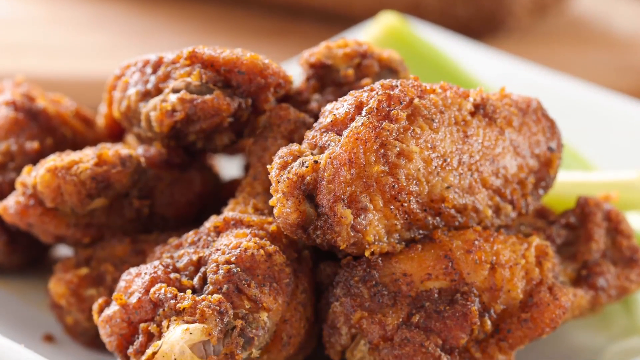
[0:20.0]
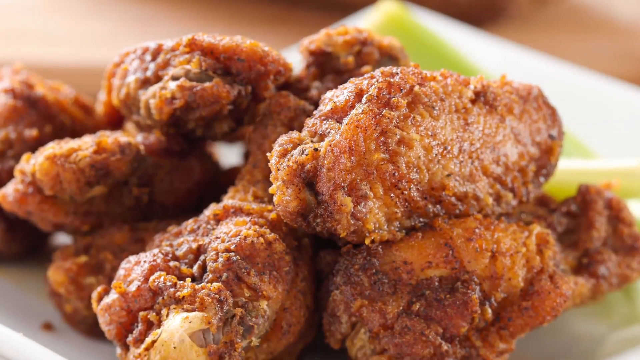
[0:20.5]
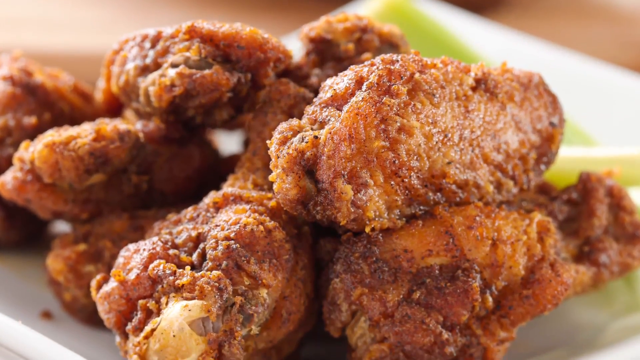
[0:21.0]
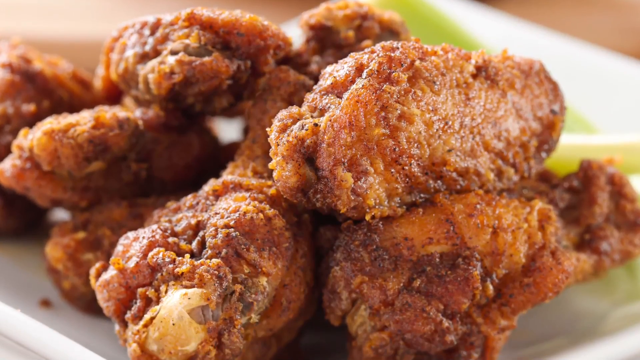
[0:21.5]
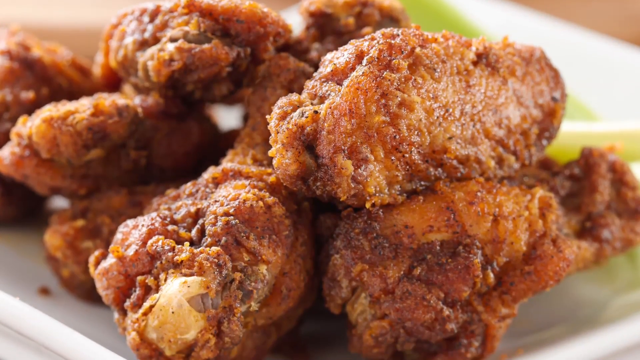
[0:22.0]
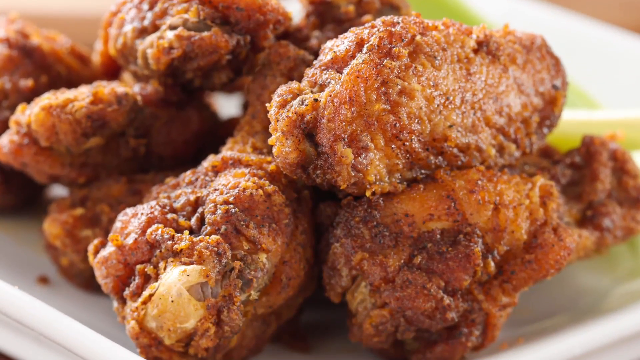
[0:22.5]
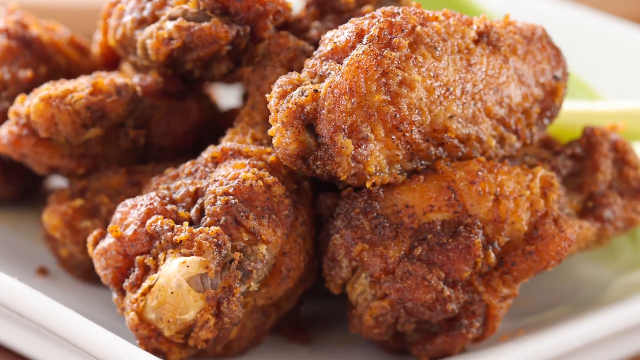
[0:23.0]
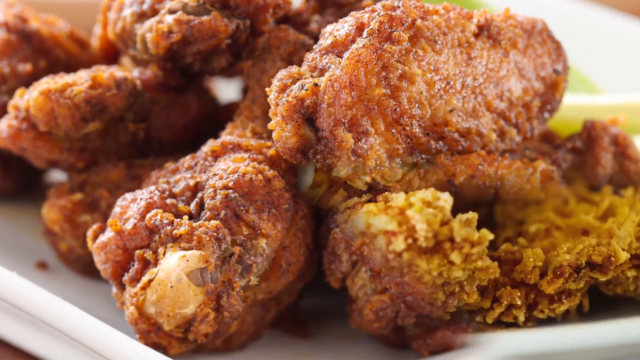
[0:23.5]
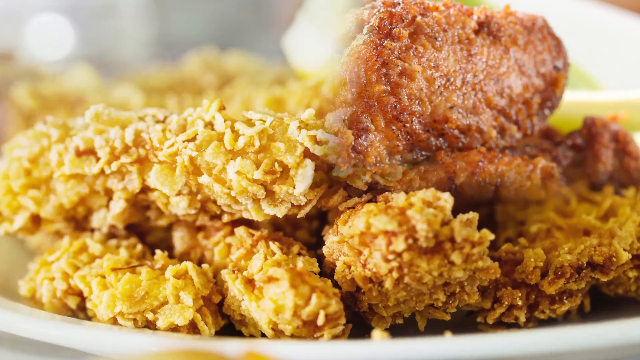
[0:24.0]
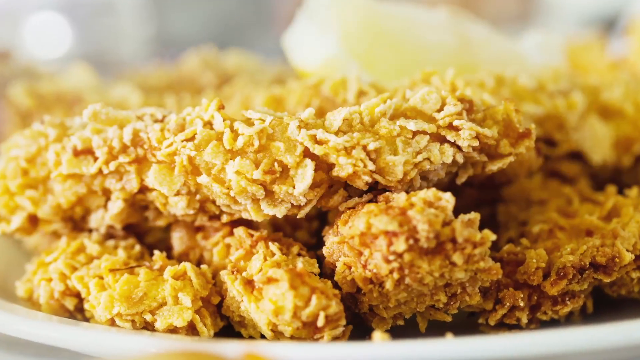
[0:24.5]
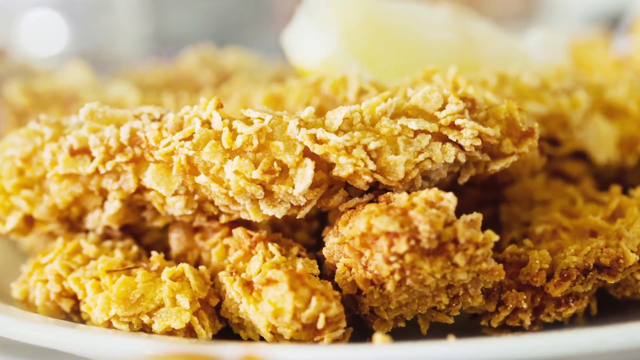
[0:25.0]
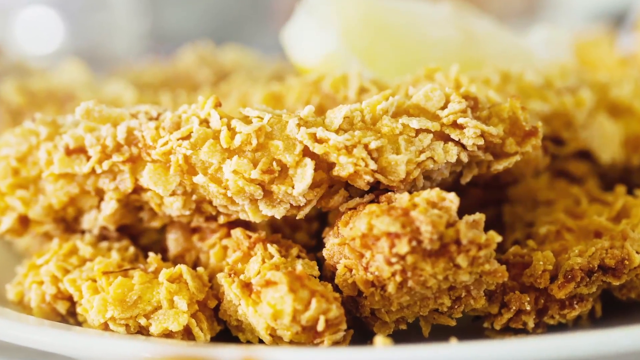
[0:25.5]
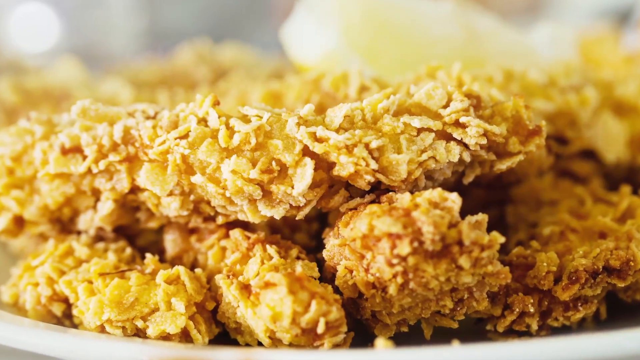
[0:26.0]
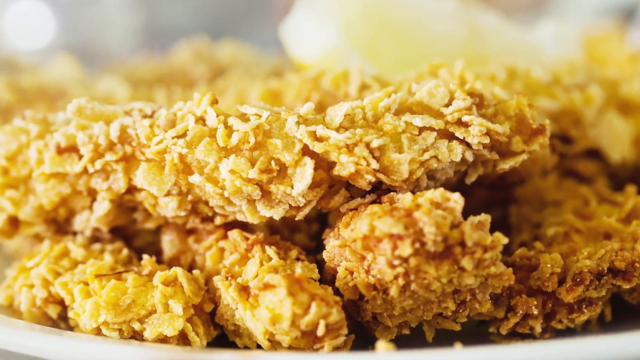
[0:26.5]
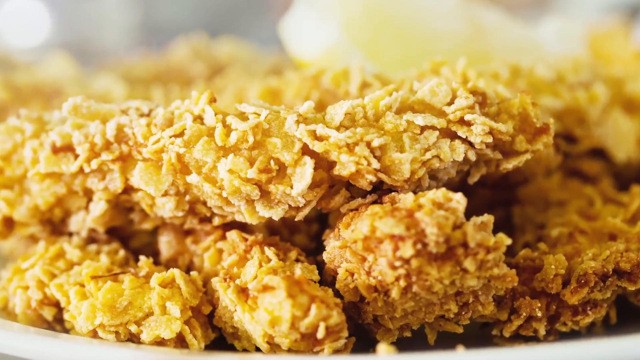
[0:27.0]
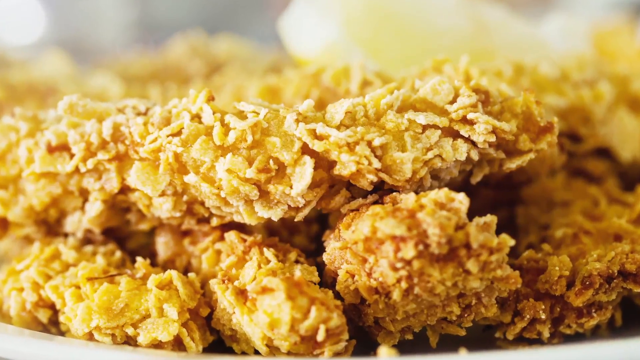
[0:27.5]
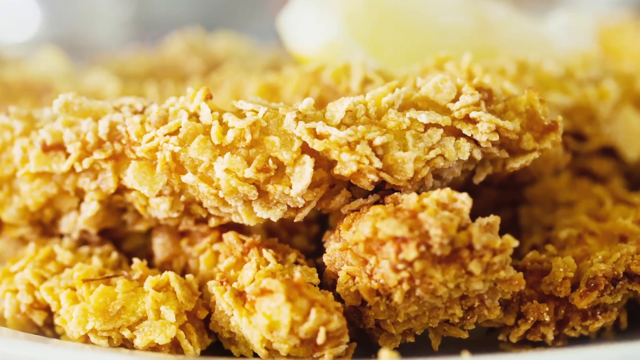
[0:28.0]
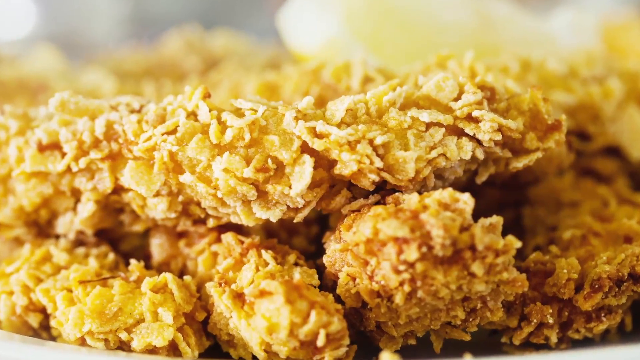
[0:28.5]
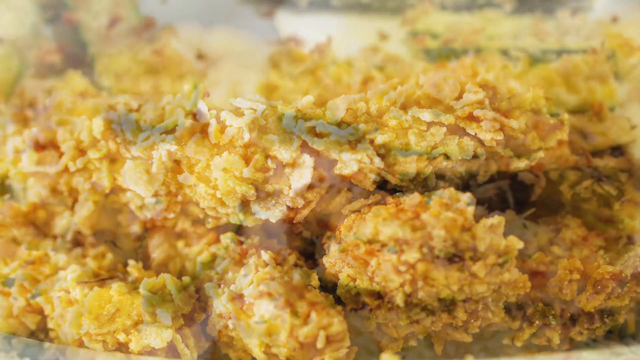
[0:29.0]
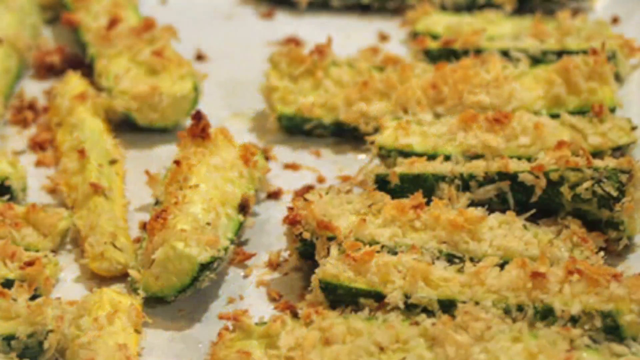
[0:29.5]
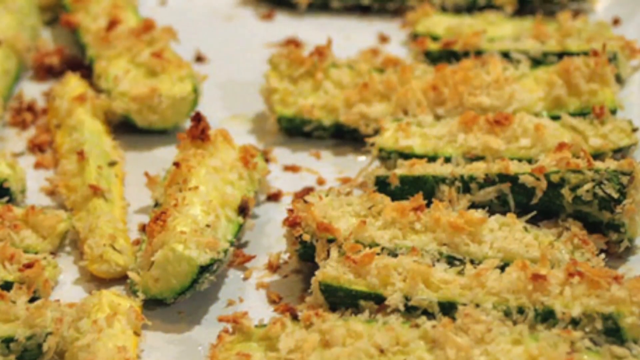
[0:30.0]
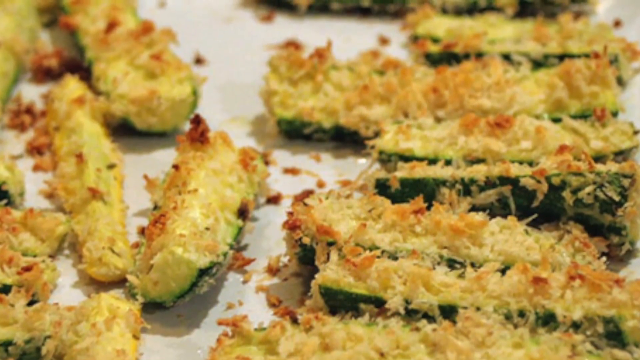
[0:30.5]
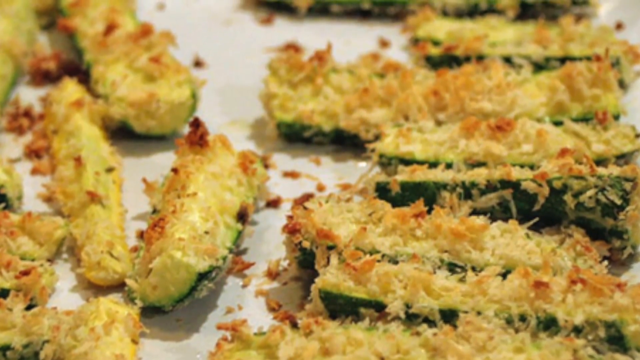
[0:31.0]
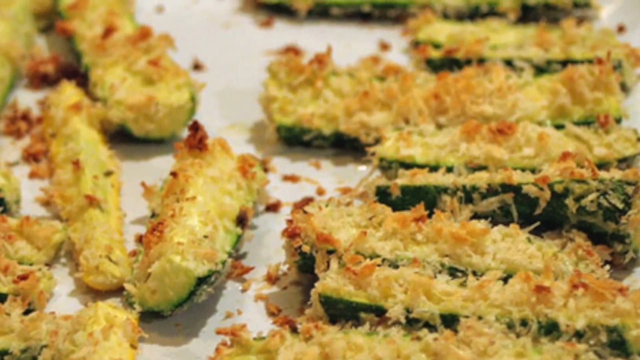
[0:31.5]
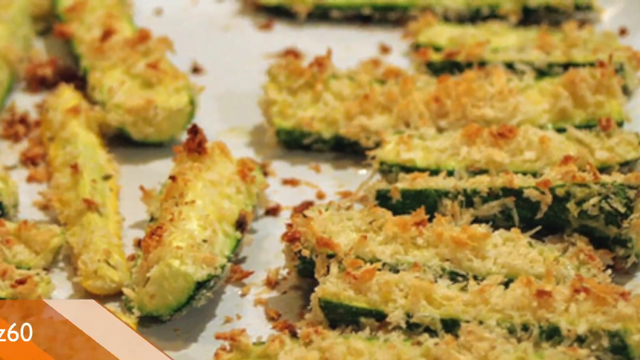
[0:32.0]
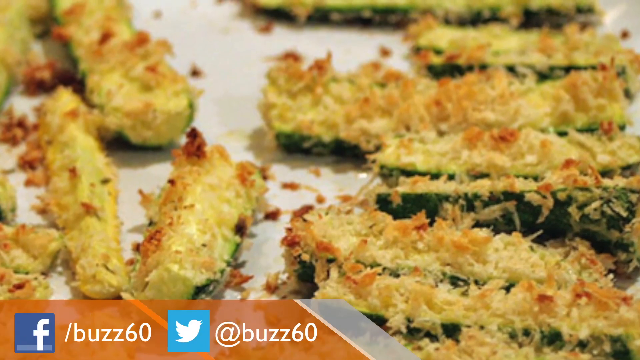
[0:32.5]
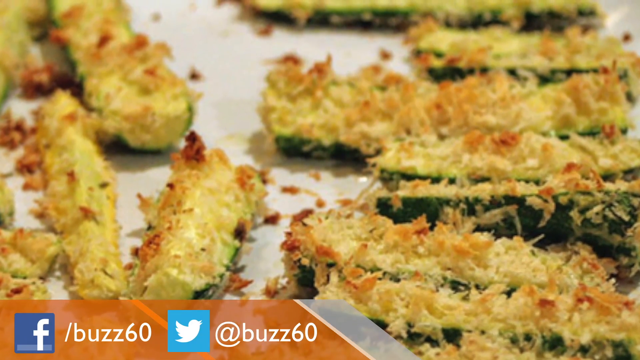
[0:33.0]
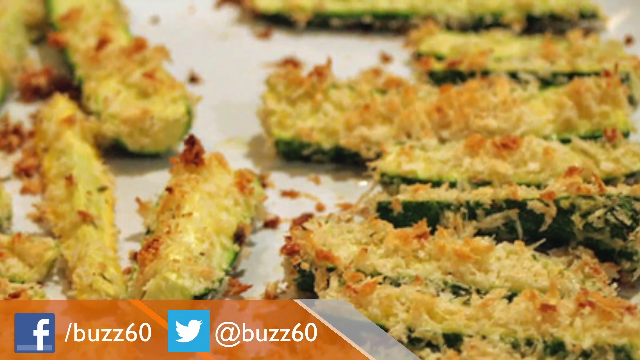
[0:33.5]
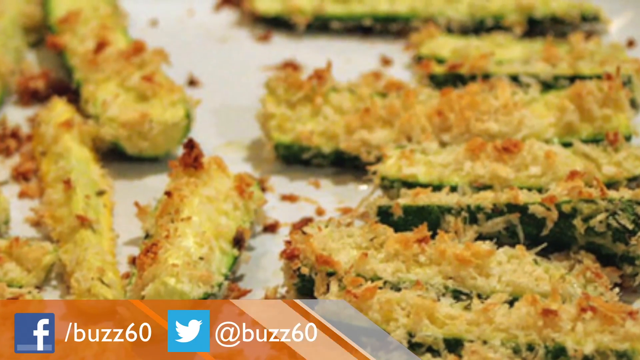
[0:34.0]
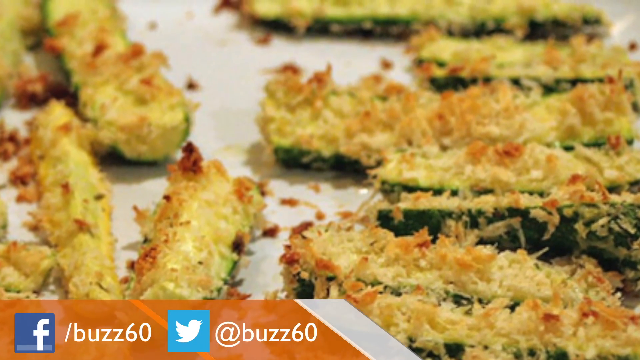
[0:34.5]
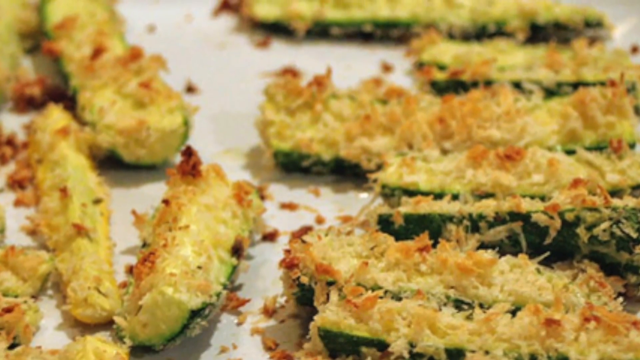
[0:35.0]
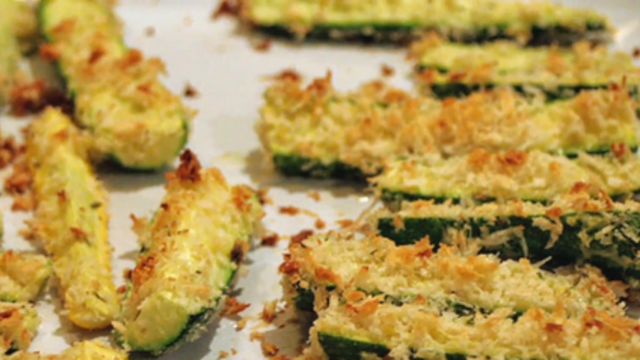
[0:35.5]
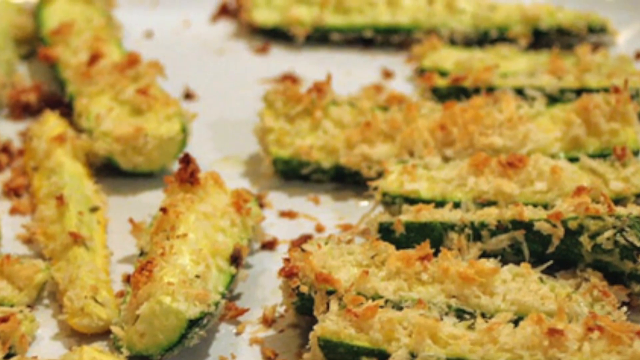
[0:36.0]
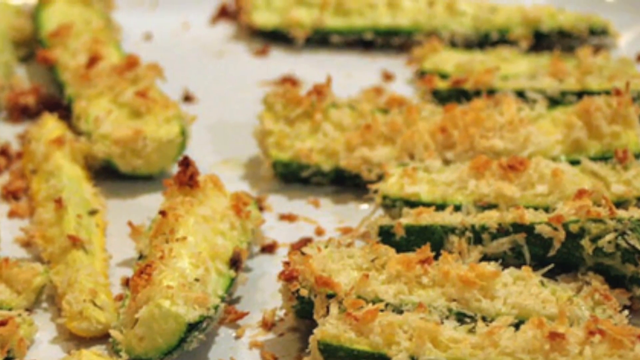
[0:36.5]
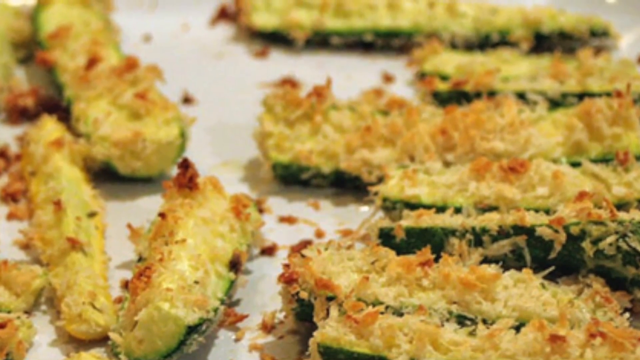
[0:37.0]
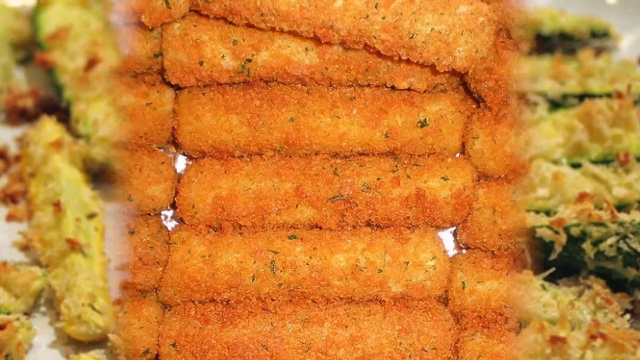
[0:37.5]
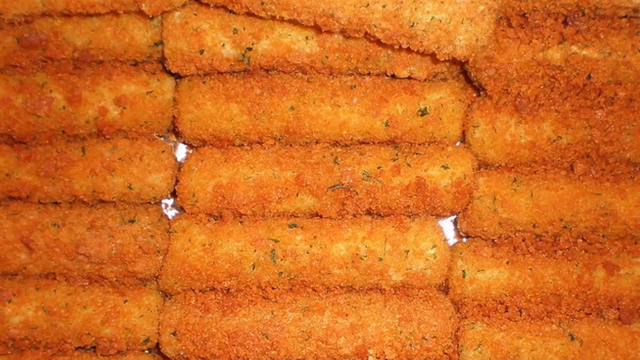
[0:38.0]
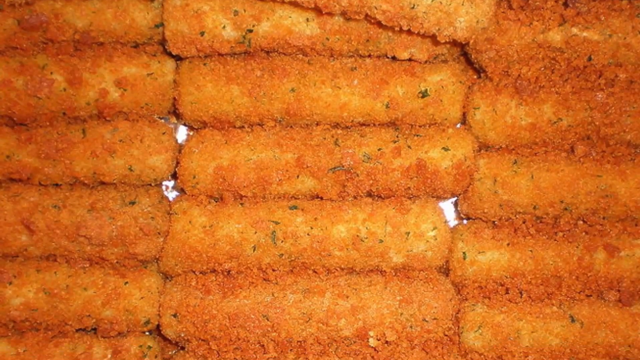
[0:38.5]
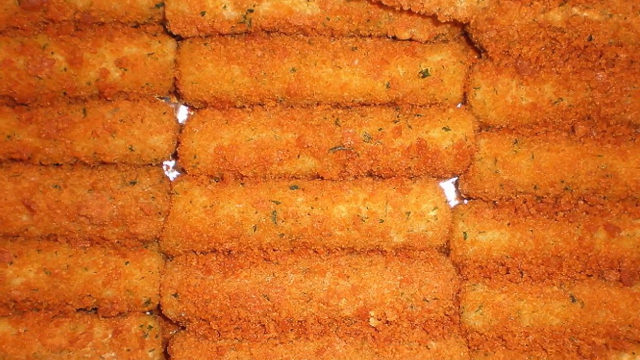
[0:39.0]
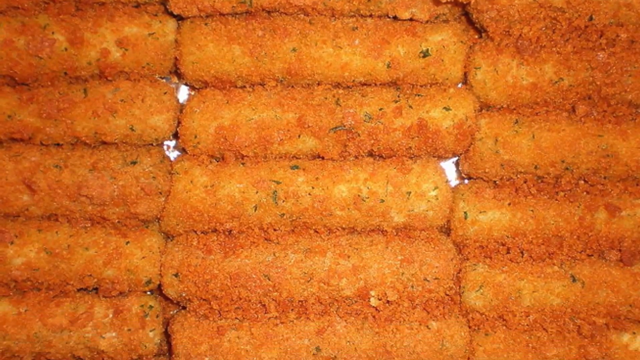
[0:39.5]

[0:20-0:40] Fried chicken is placed on a plate, and other fried delicacies are placed on a plate. What appear to be different kinds of cake are shown. The Facebook and Twitter handles appear on screen. Other images of different fries and delicacies follow, and then many sausages fill the screen.